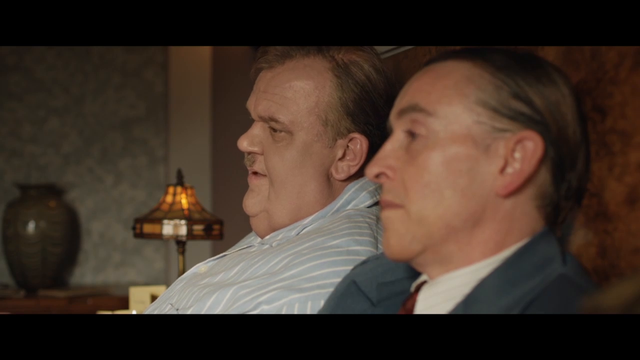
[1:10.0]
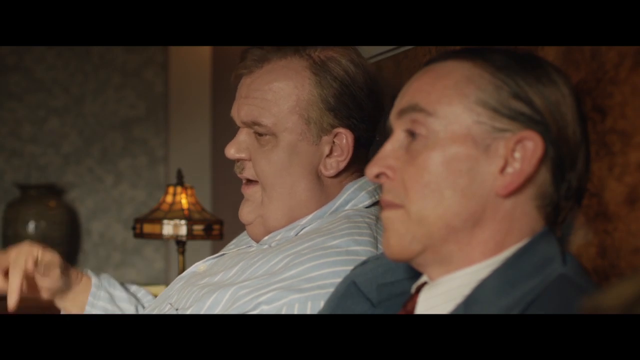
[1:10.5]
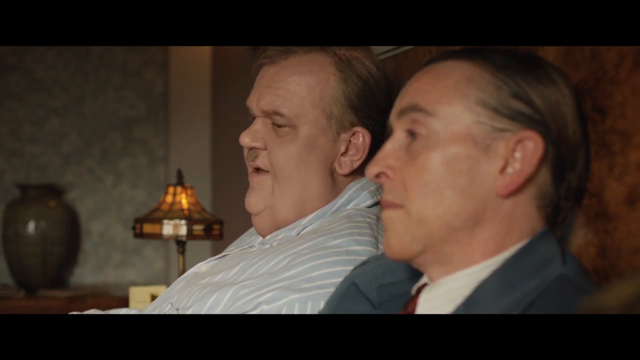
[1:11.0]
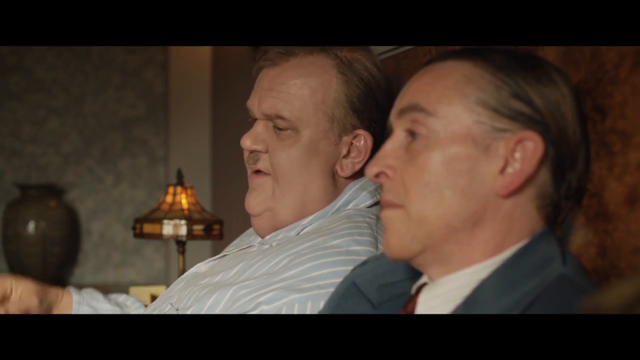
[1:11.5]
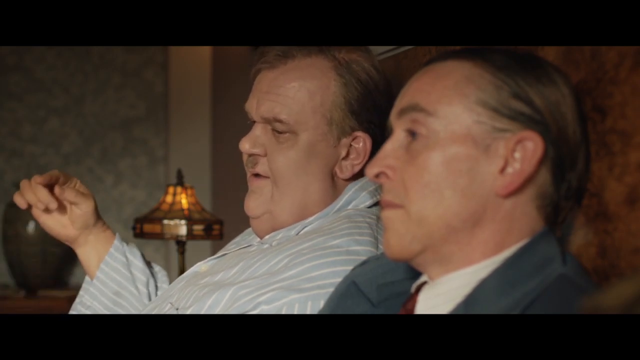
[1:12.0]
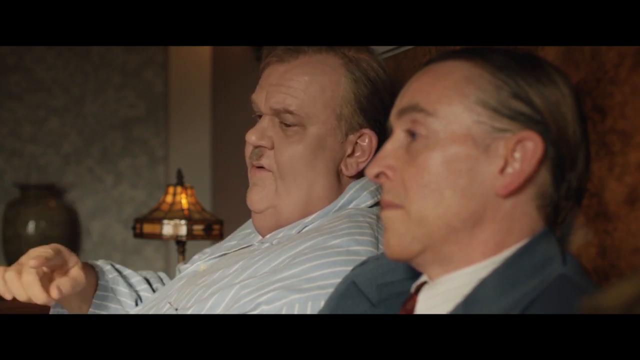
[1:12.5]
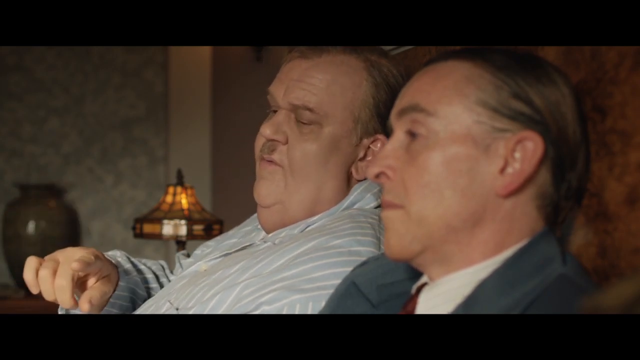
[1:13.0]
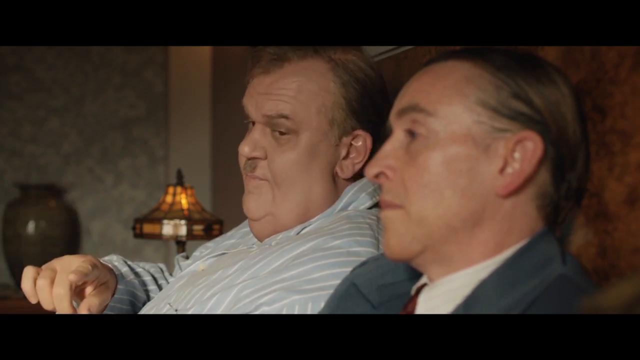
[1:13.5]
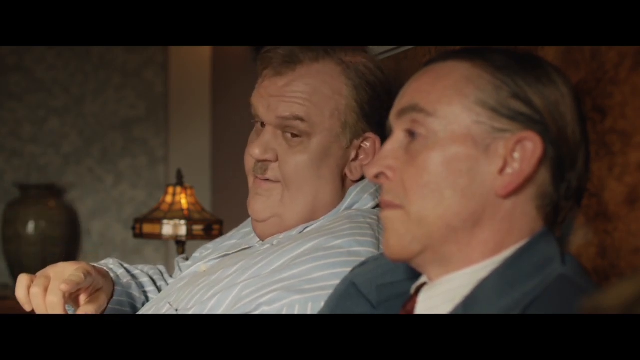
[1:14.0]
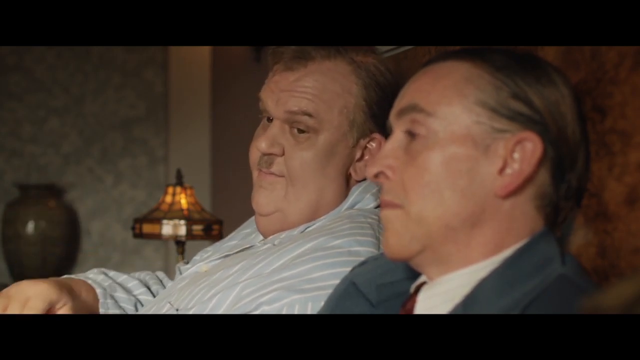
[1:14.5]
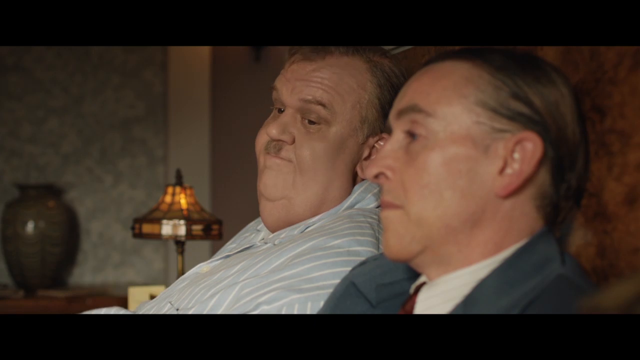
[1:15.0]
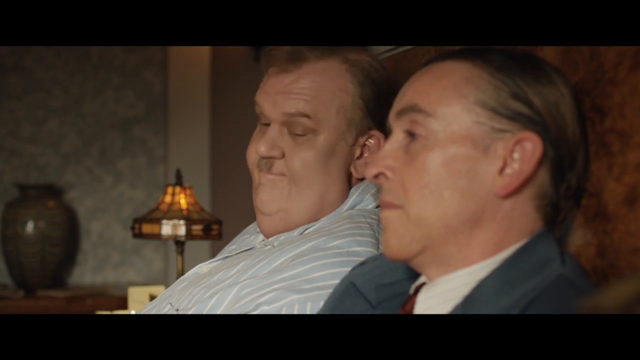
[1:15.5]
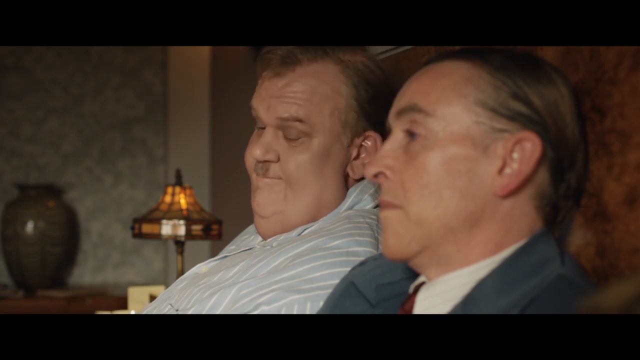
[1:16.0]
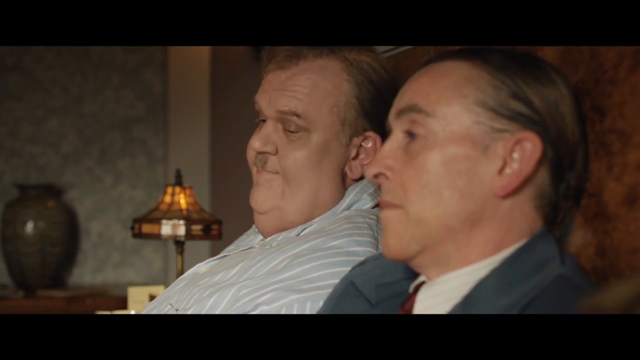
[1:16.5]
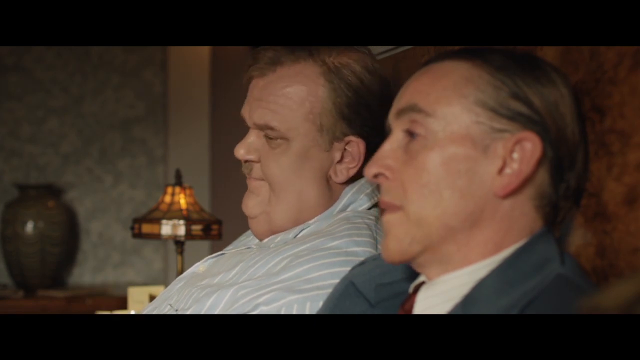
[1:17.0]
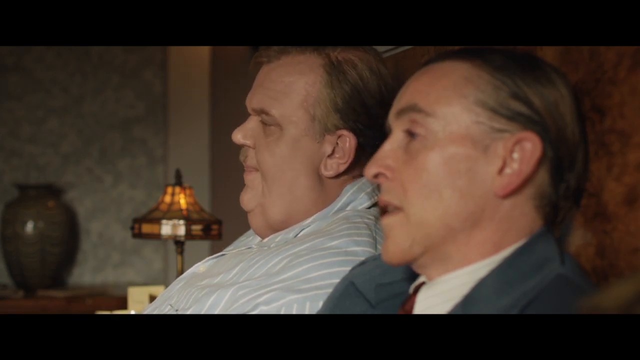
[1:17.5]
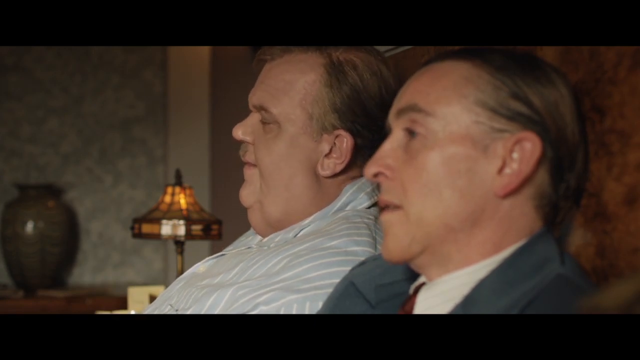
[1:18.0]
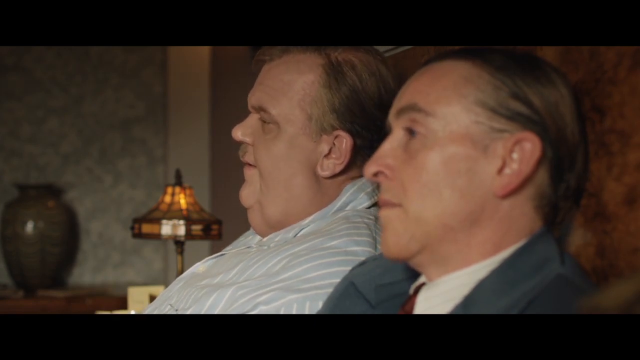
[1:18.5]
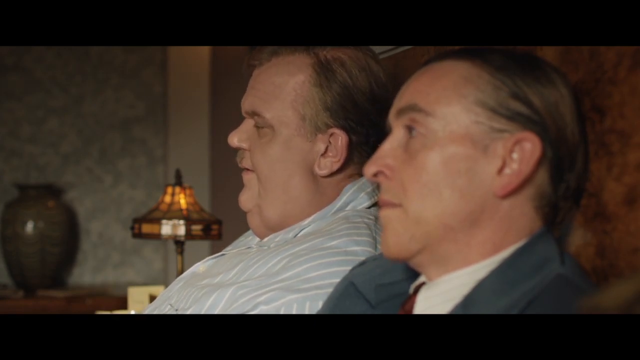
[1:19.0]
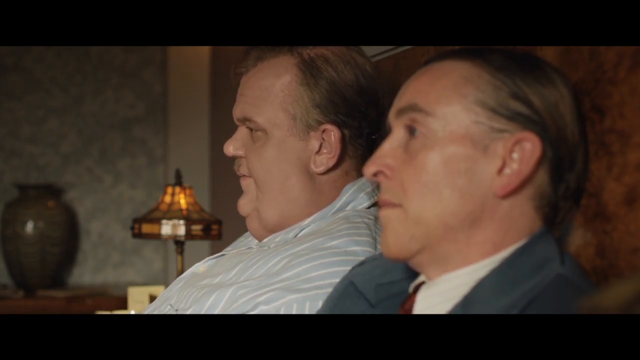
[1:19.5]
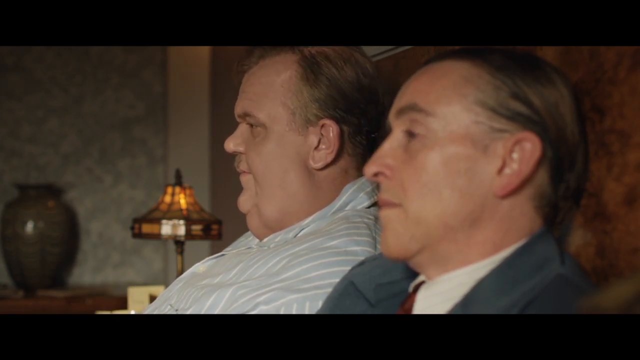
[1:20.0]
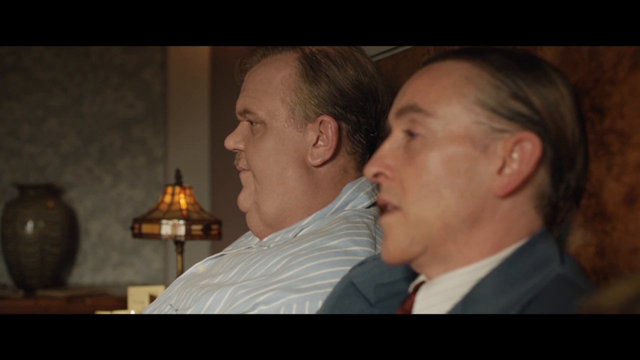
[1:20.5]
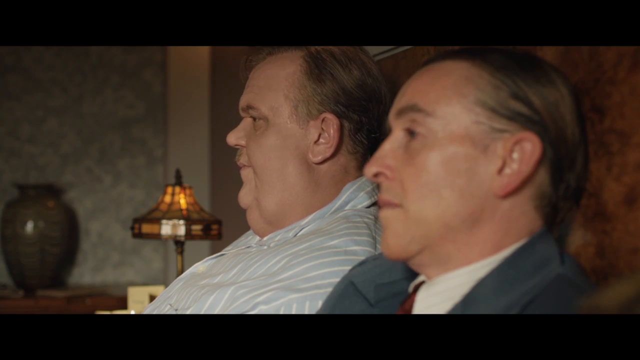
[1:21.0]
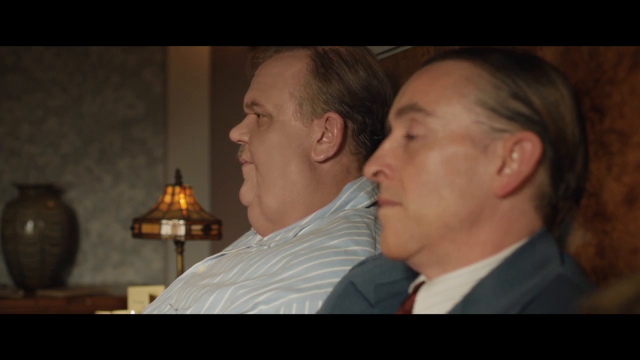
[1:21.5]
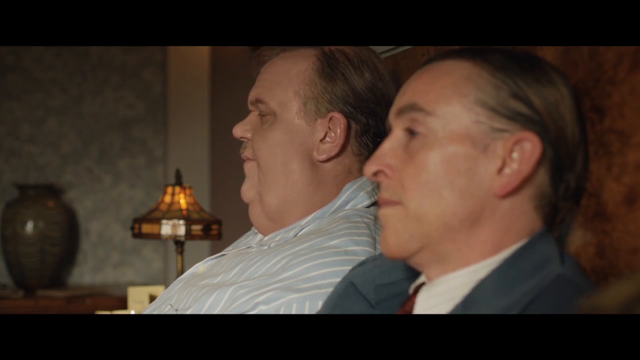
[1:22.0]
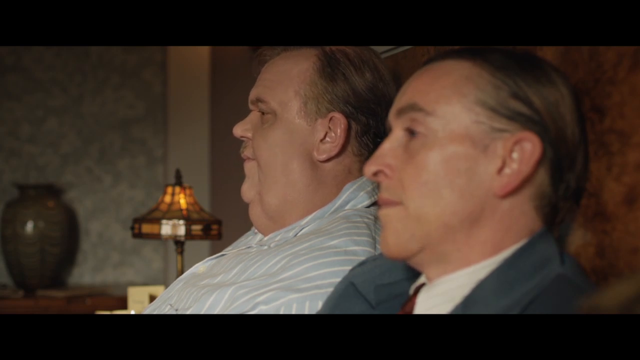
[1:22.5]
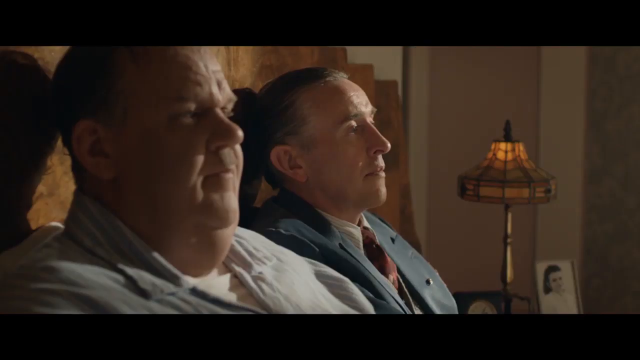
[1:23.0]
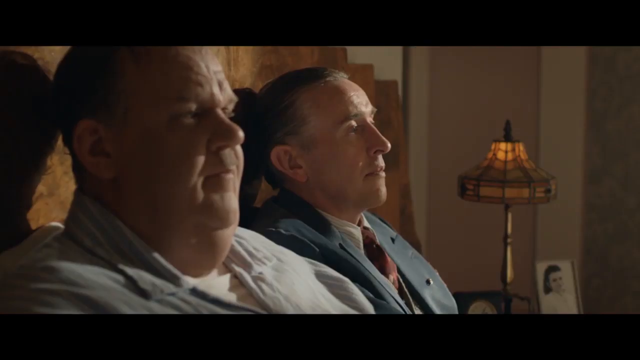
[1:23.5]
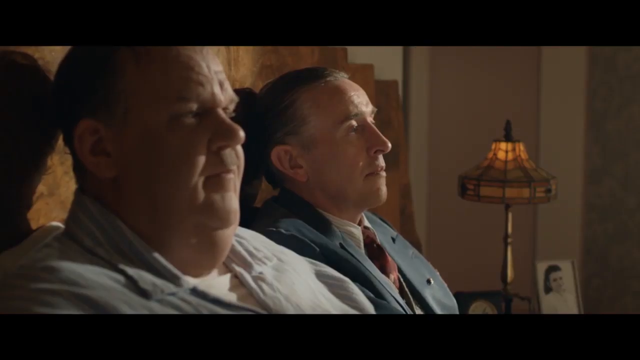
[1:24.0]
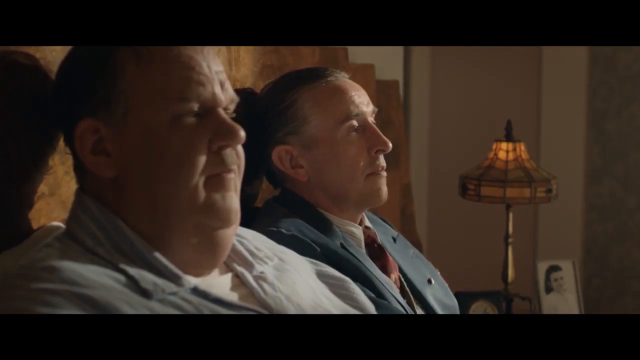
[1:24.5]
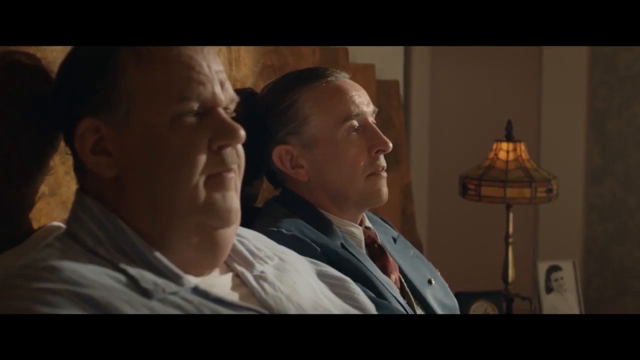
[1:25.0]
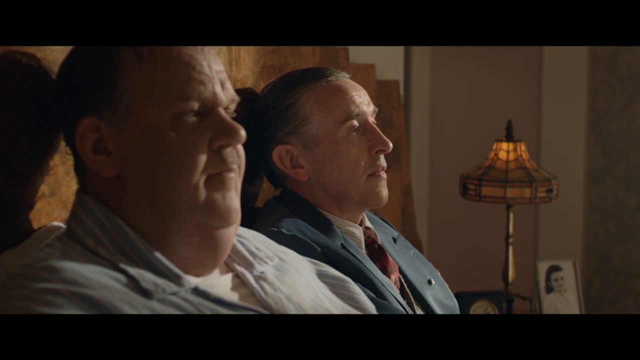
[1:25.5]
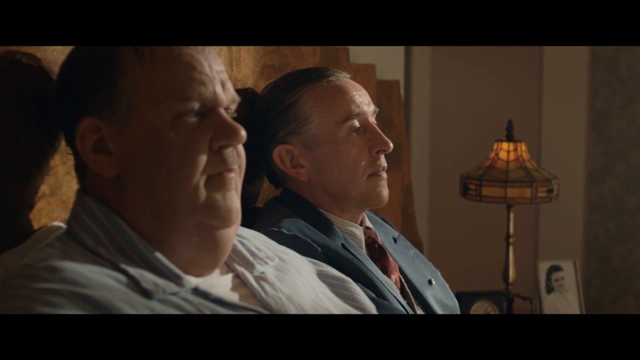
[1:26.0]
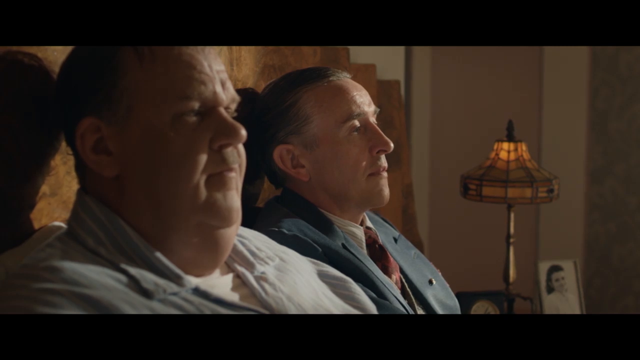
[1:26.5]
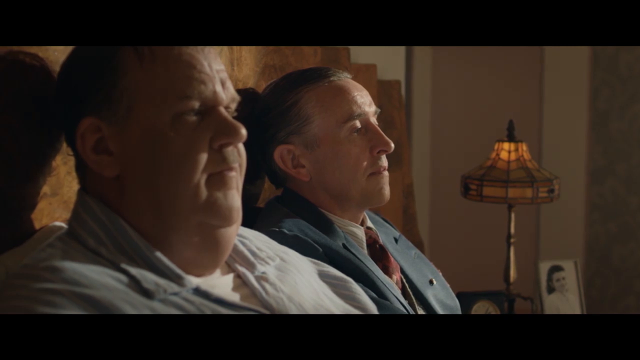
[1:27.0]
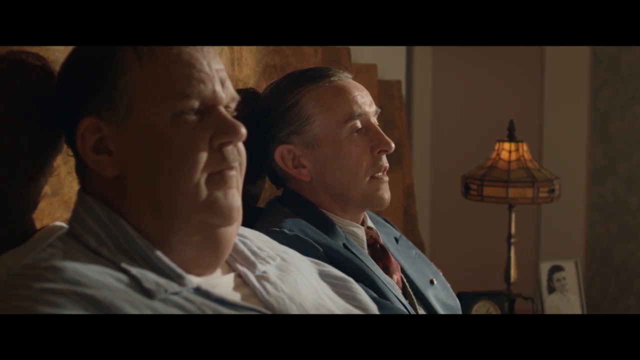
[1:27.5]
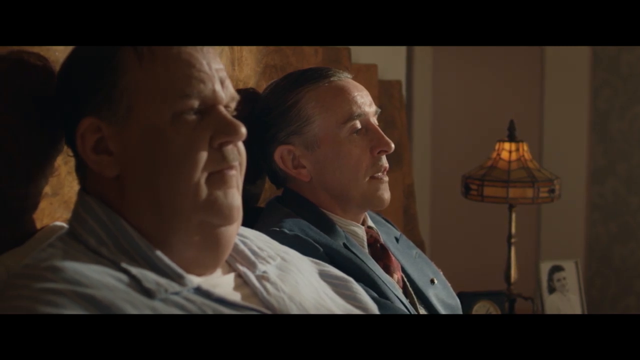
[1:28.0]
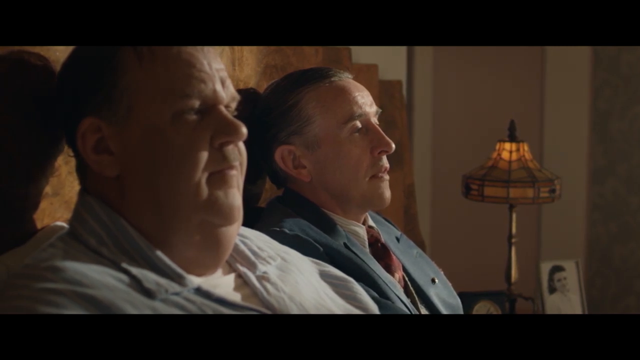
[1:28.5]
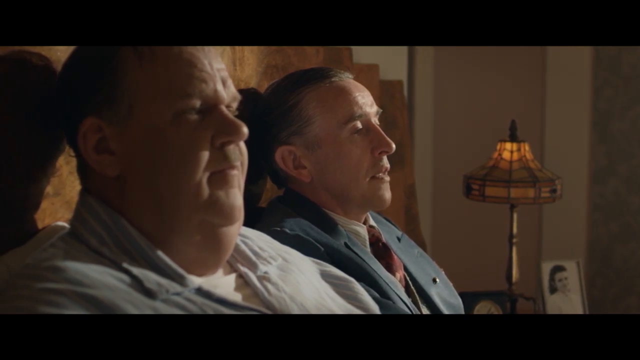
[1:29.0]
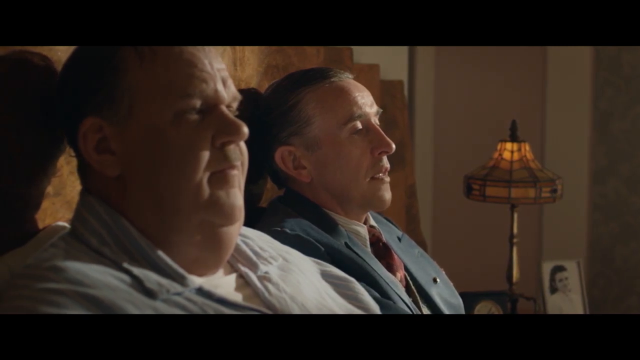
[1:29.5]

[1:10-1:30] A zoomed-in camera angle shows the left side of the faces of the heavyset man and the thin man. The heavyset man lifts his right arm with his pointer finger pointing downward, then brings the arm back down out of view. He lifts his right arm and hand again, this time with his pinky, ring and middle fingers curled toward his palm and his pointer finger pointing to the left at an angle across the thin man's lap. A half mustache is visible under the heavyset man's nose. He looks to his left at the thin man's face and nods twice; the thin man responds with one quick nod. The heavyset man looks down and nods three times. The thin man nods once, opens his mouth to speak and blinks. The camera switches to the right side of the men's faces; the heavyset man blinks, both men looking straight forward, and the thin man opens his mouth to speak.